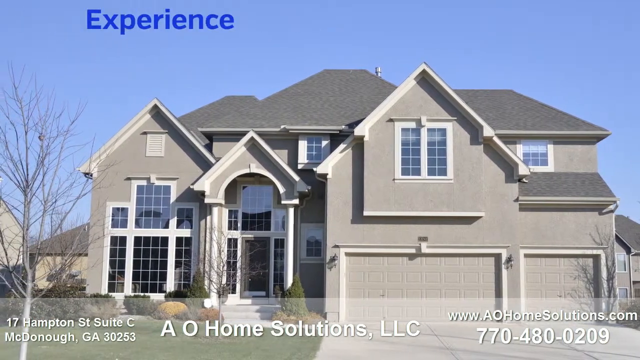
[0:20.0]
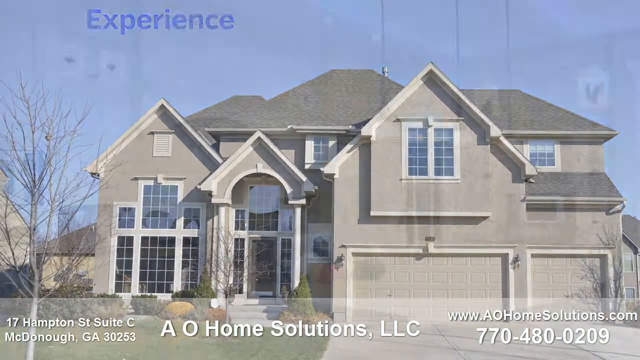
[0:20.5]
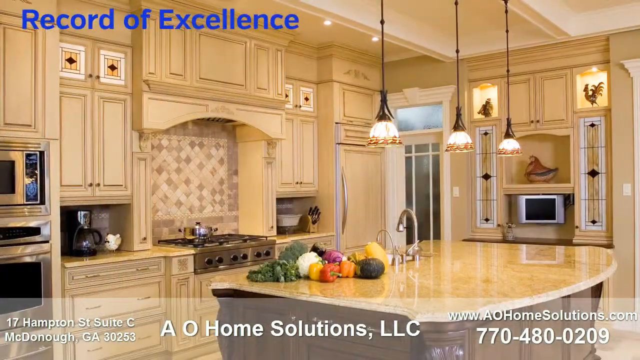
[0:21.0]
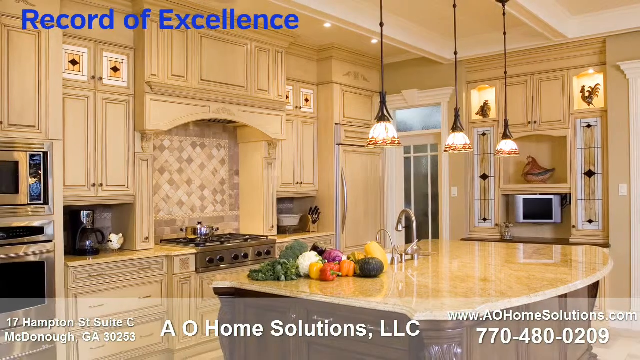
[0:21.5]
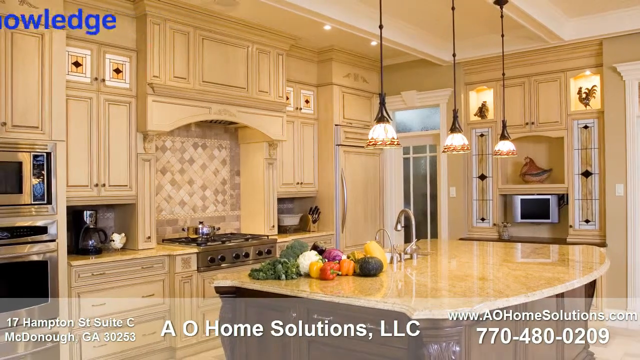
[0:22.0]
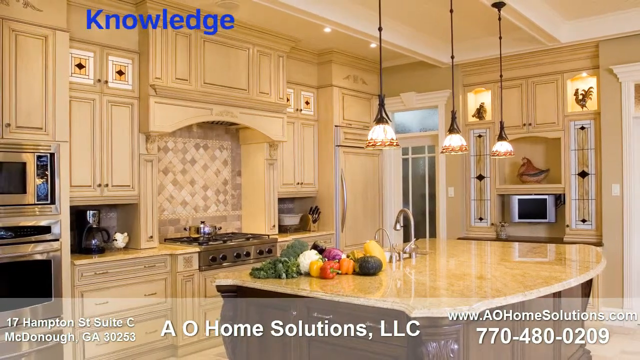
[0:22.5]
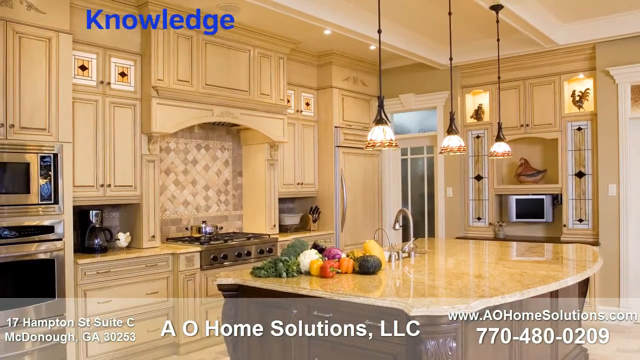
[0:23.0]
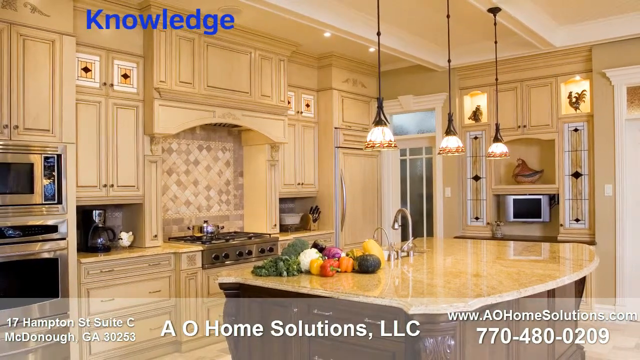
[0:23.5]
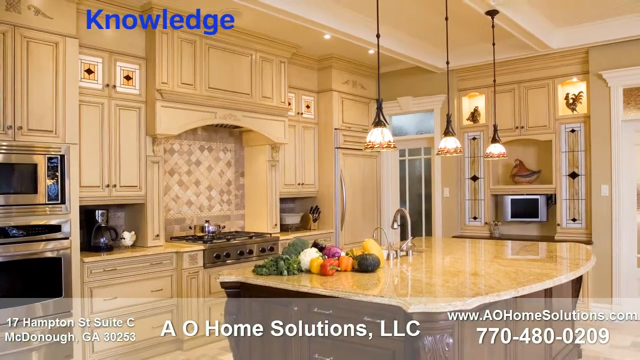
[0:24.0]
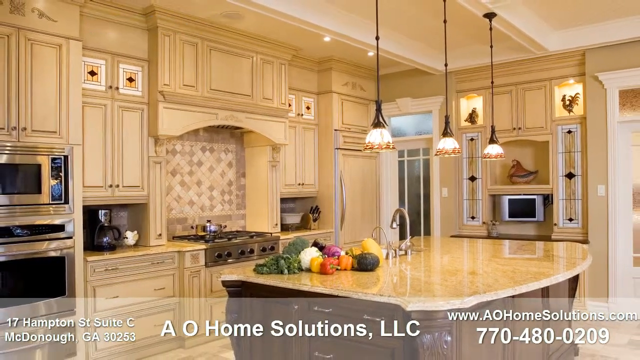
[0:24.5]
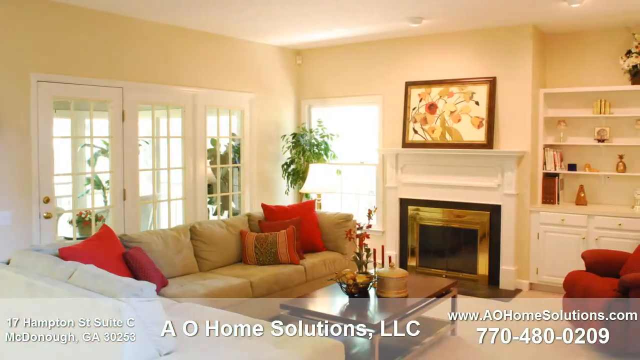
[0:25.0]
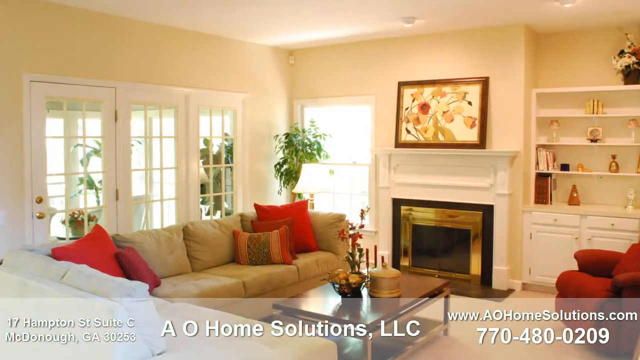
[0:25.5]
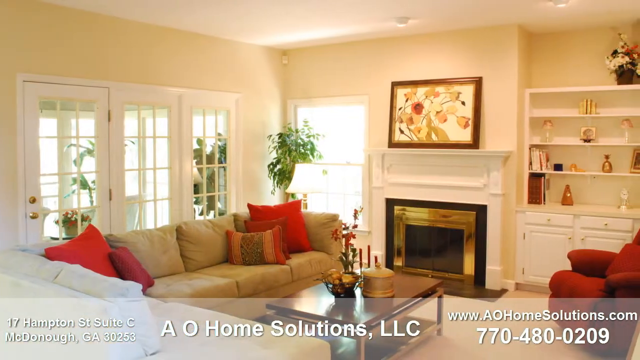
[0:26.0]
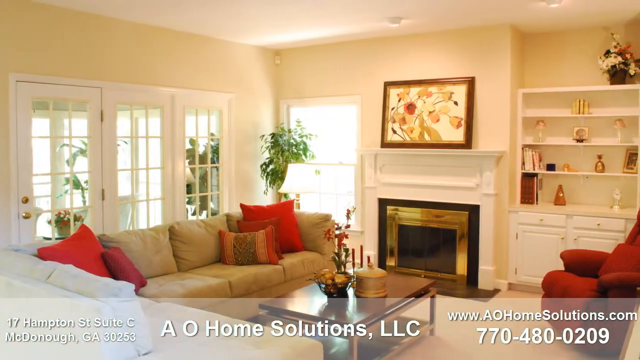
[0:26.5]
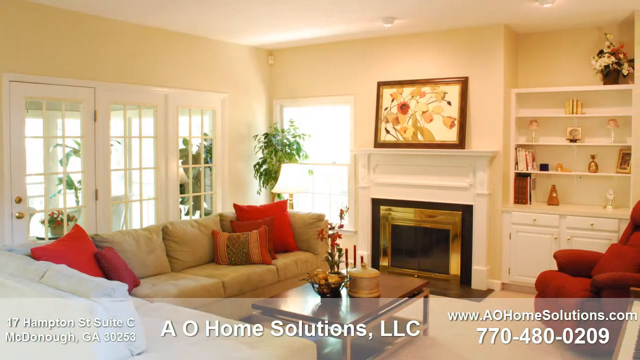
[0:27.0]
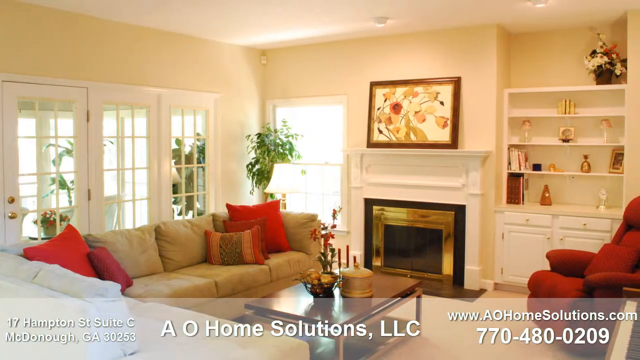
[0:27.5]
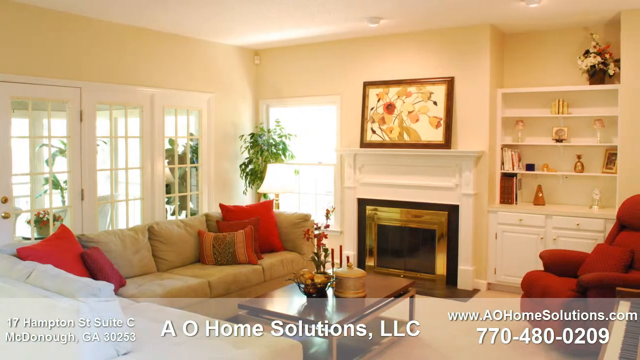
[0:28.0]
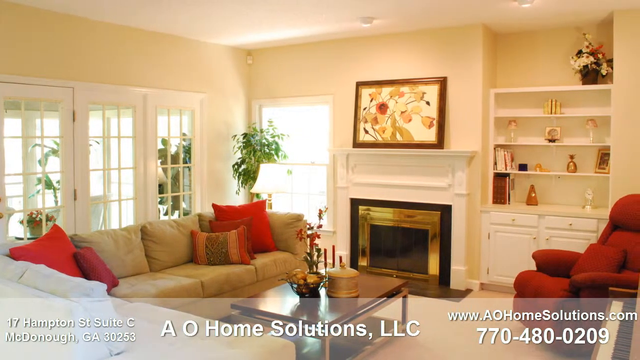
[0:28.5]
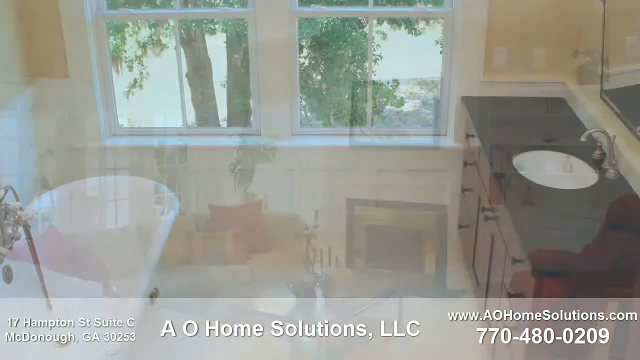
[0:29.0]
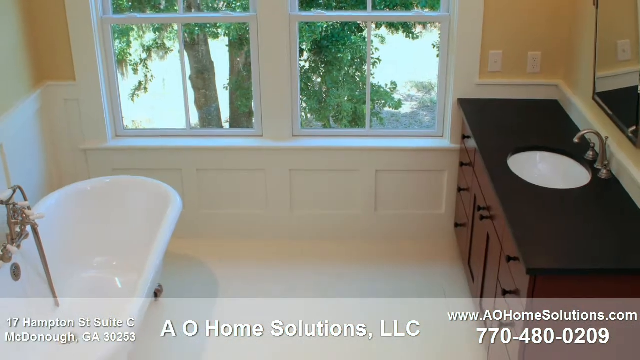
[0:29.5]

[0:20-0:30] The video walks through a new house that is beautiful and elegant.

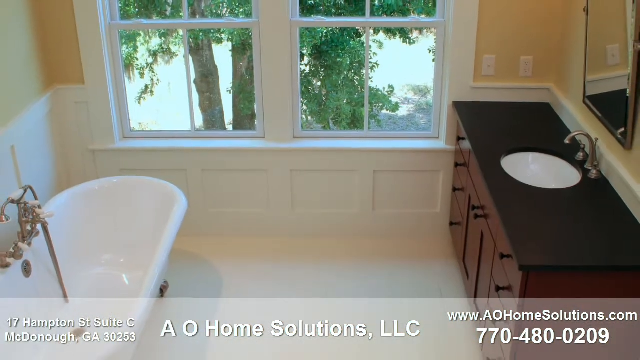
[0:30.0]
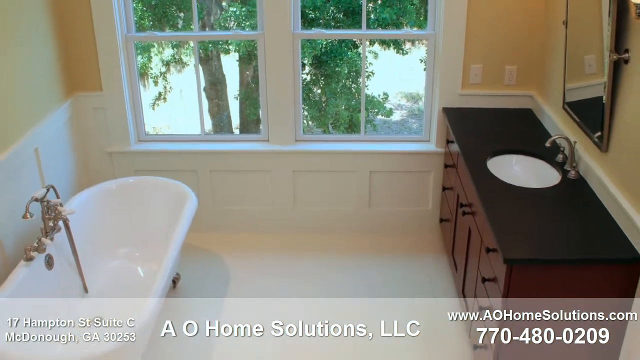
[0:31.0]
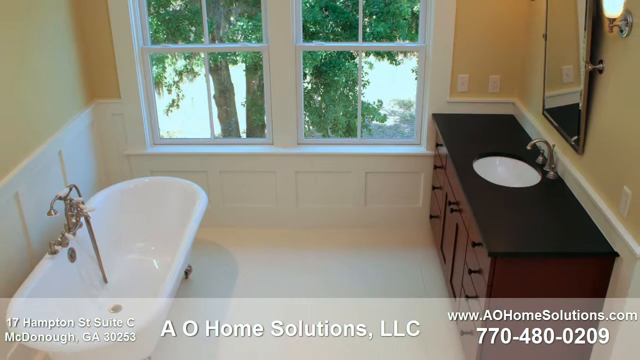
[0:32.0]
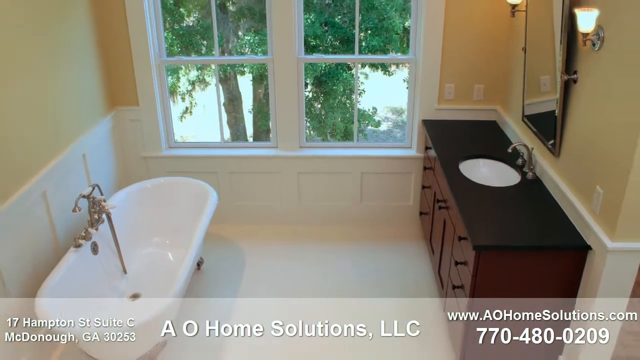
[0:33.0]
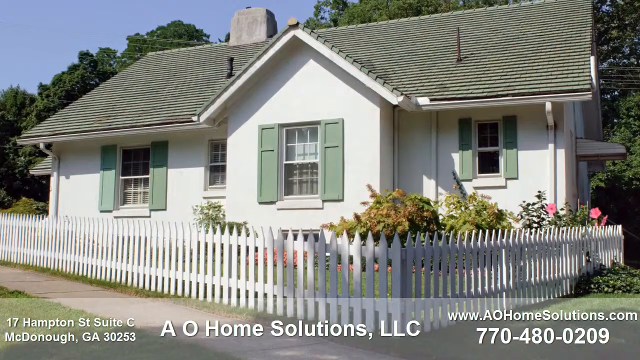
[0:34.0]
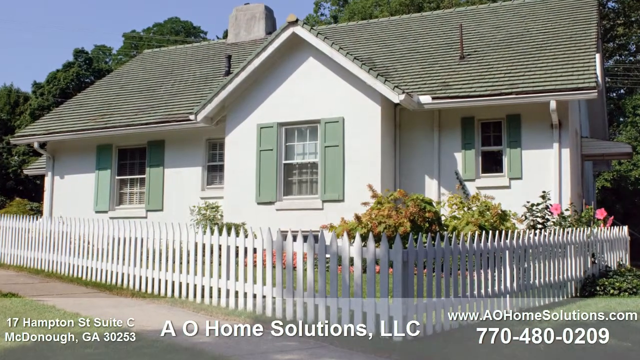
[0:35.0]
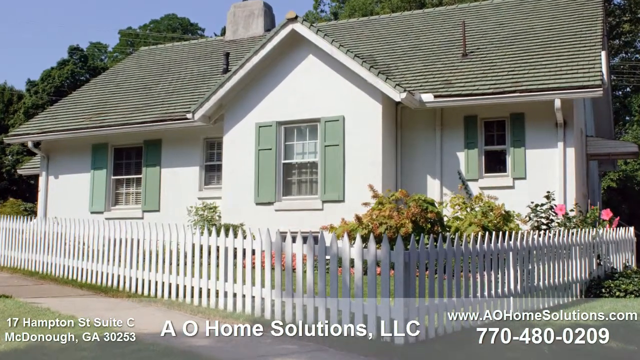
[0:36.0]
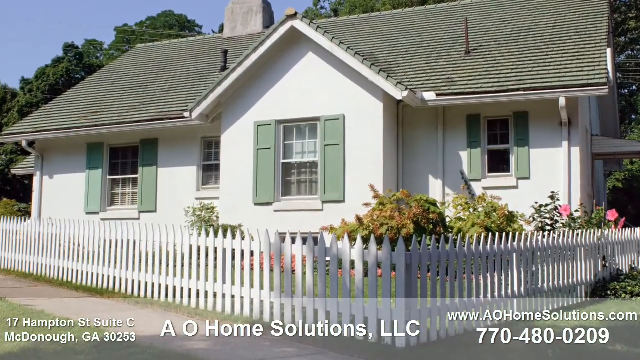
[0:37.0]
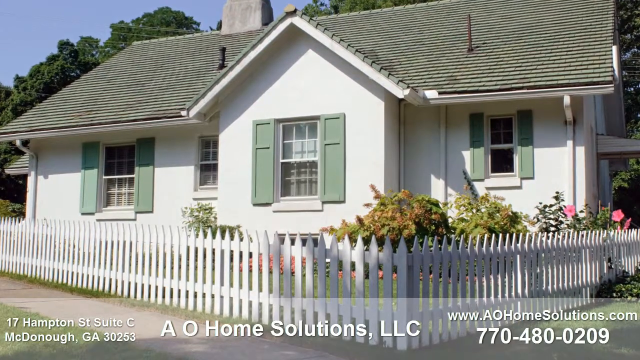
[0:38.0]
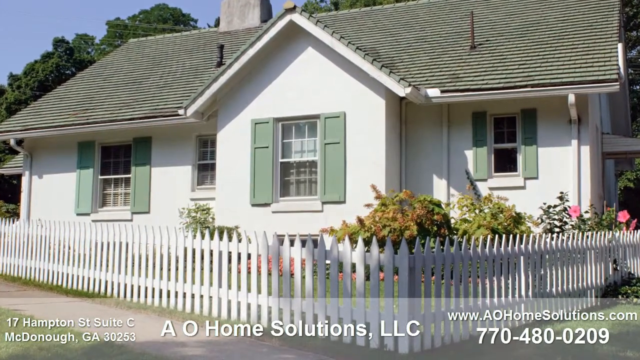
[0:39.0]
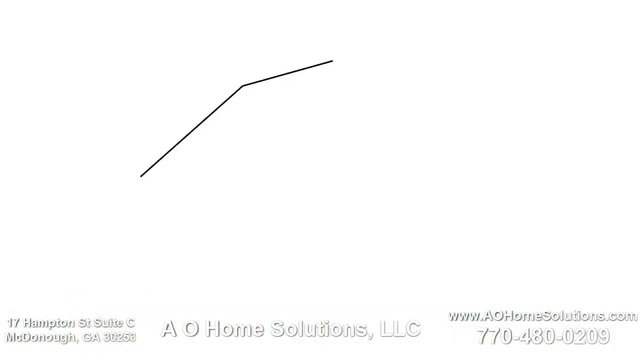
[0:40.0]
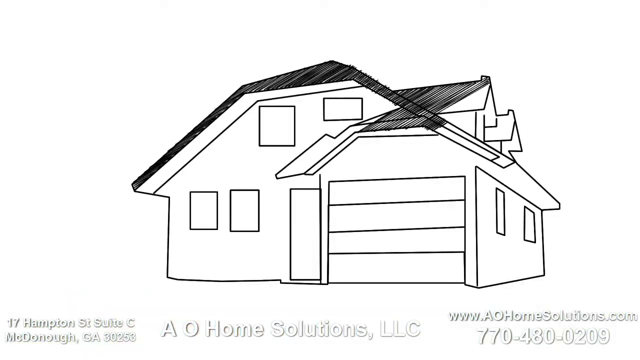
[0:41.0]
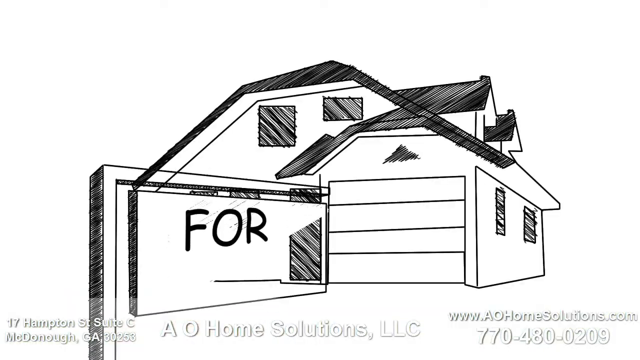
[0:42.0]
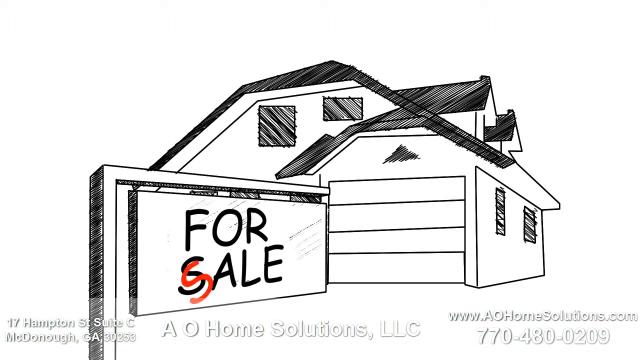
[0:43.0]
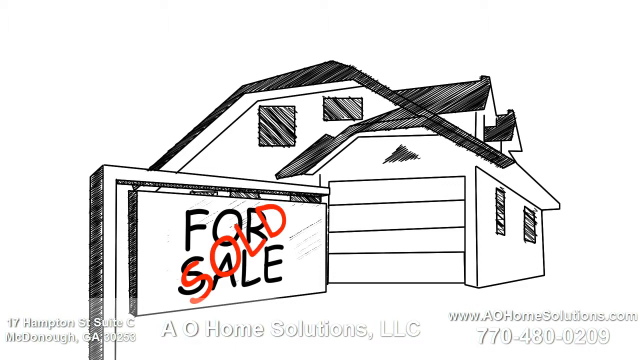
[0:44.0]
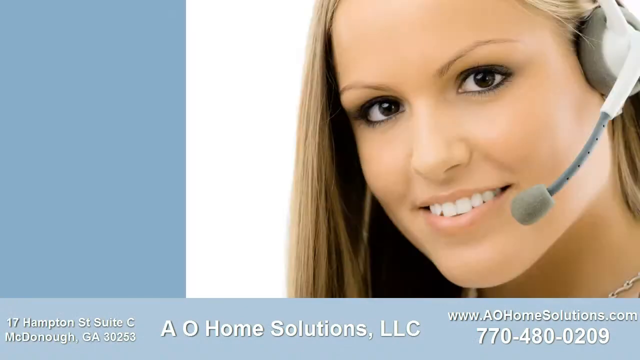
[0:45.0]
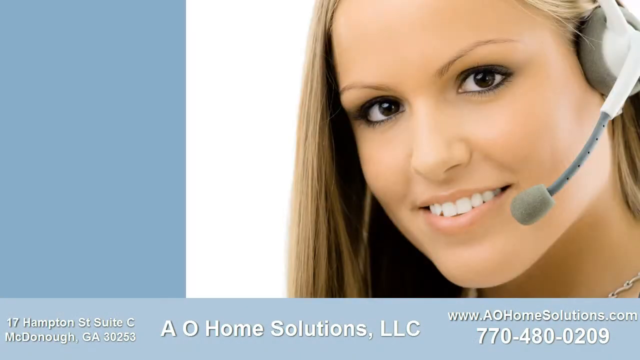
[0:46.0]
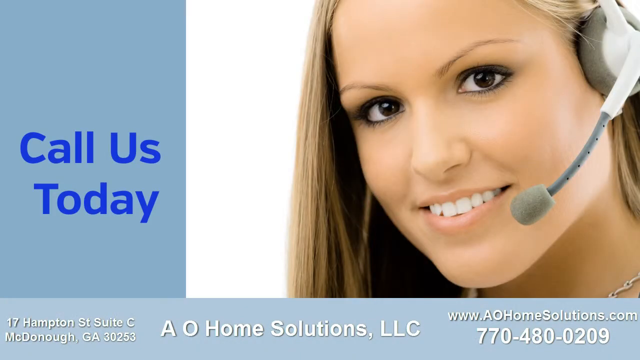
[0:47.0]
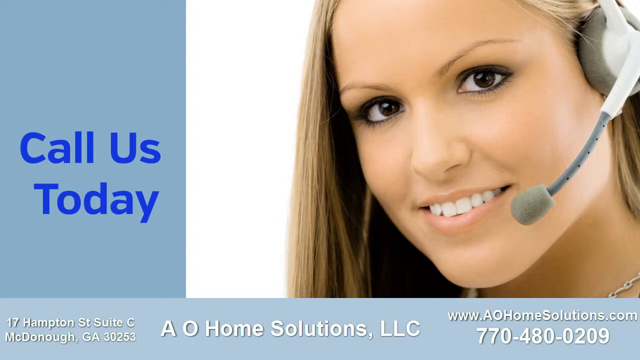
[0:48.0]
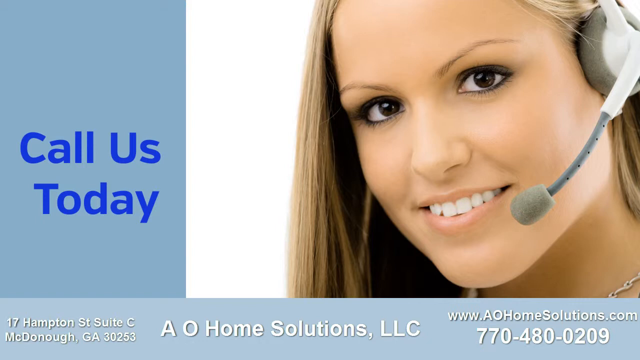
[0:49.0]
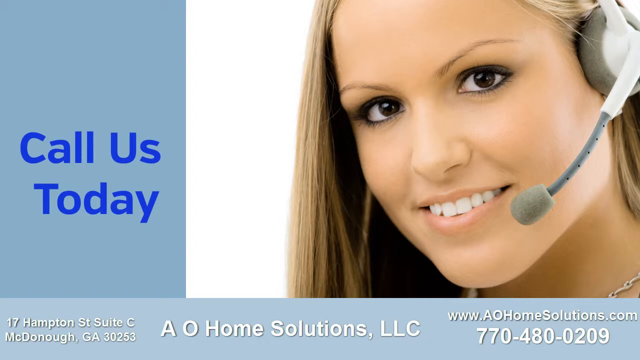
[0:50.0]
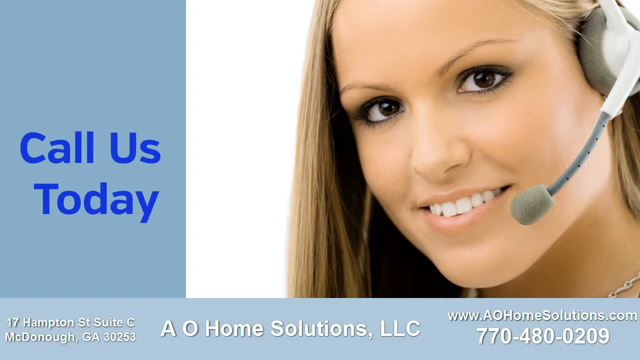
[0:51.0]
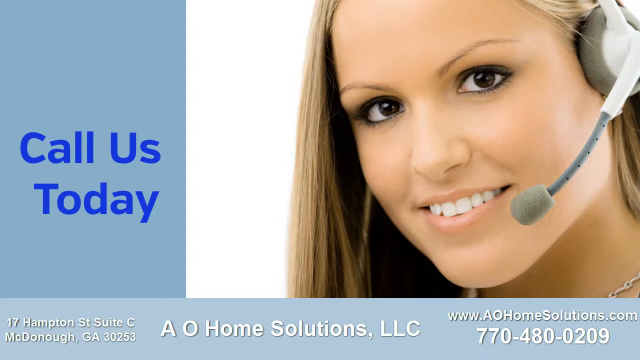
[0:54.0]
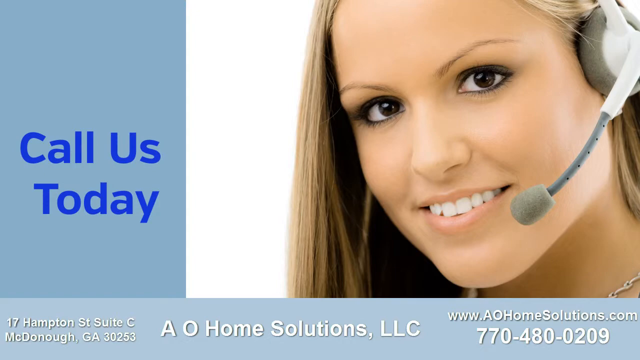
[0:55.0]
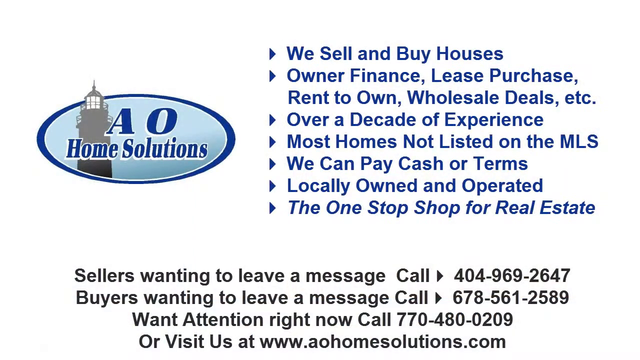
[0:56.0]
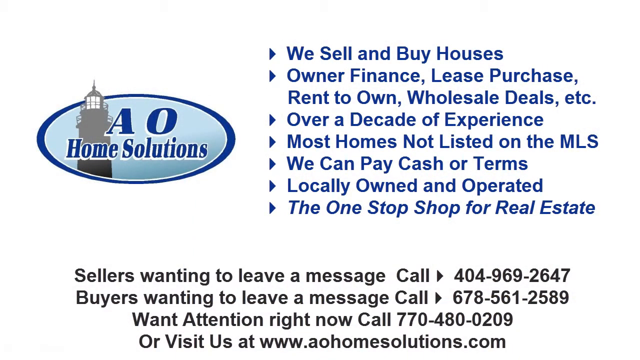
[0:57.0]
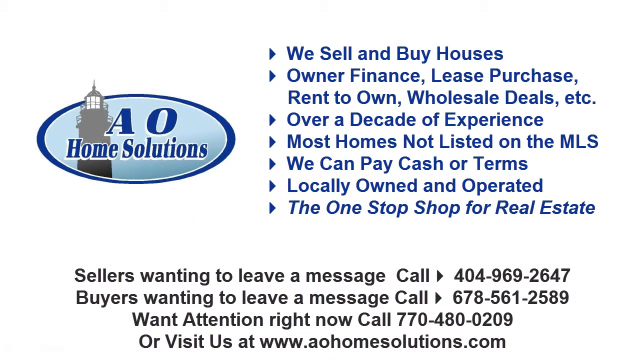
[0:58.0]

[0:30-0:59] The same real estate business that buys and sells homes appears, with the same woman, a real estate agent, researching and doing paperwork. The same house is shown. People in pictures look young, apparently no older than about 30.